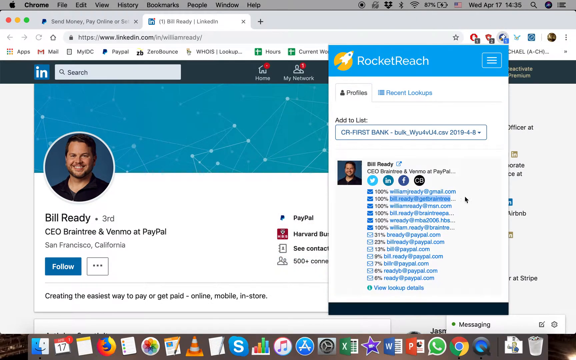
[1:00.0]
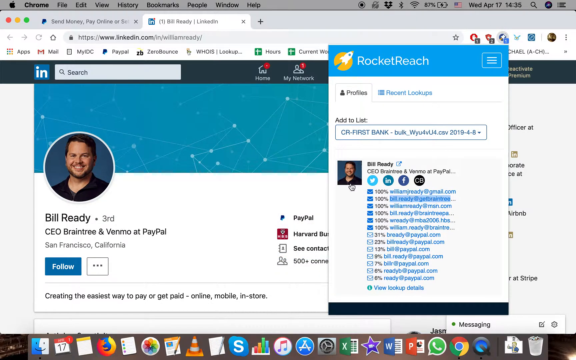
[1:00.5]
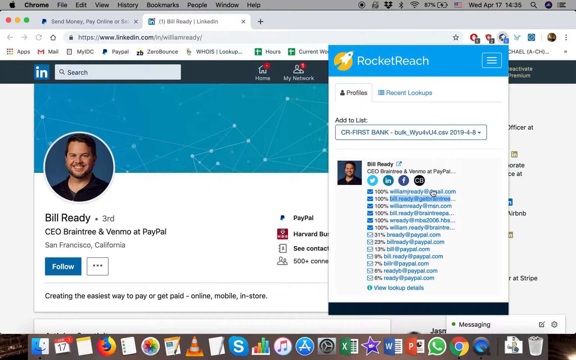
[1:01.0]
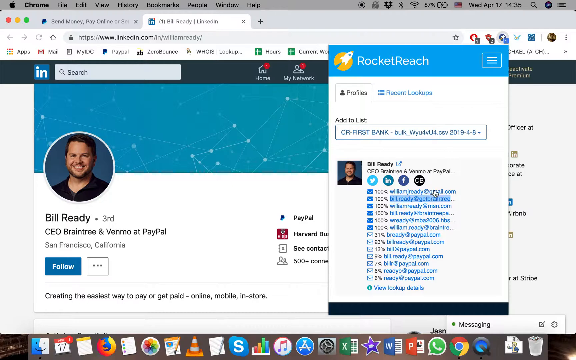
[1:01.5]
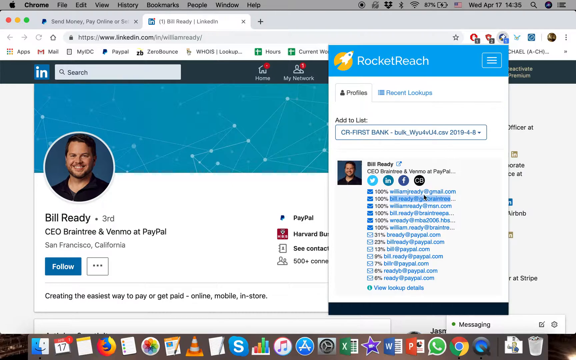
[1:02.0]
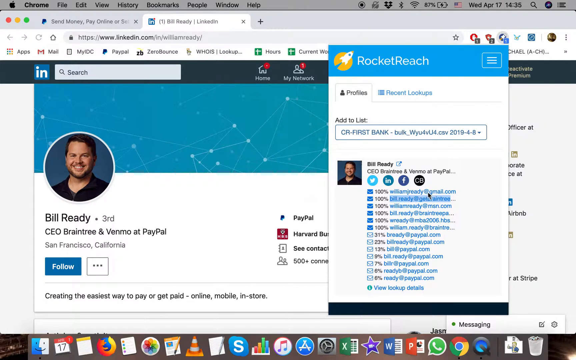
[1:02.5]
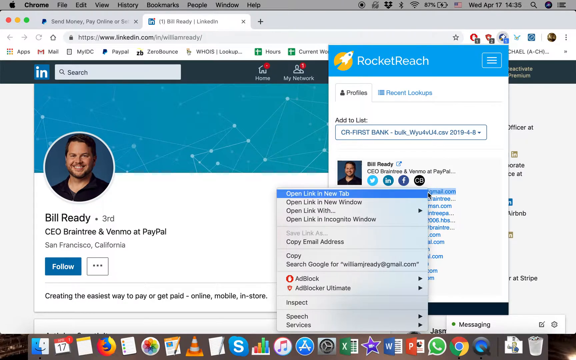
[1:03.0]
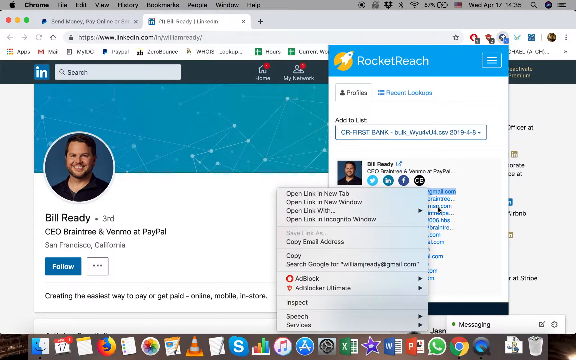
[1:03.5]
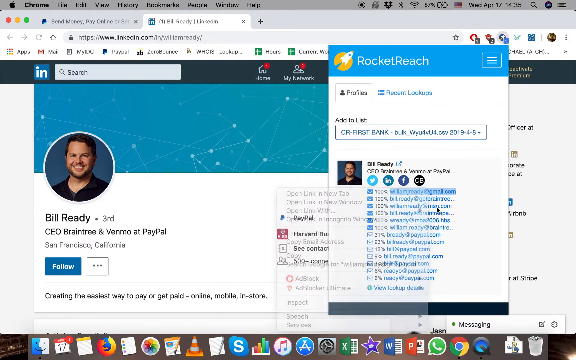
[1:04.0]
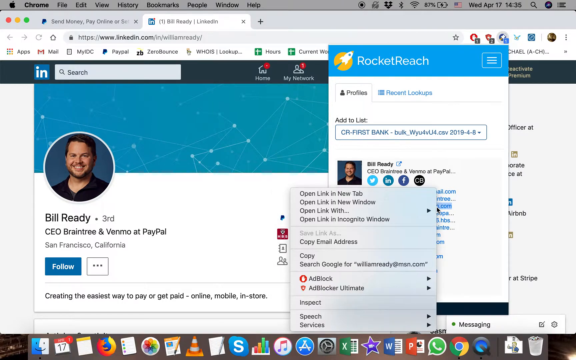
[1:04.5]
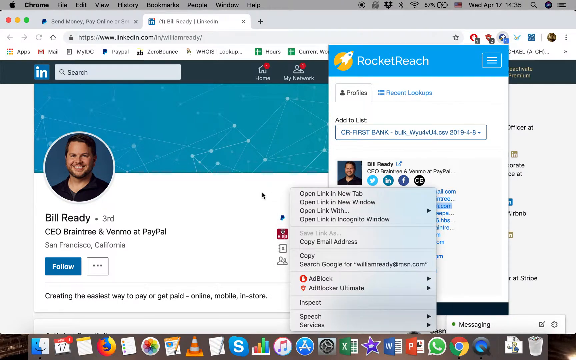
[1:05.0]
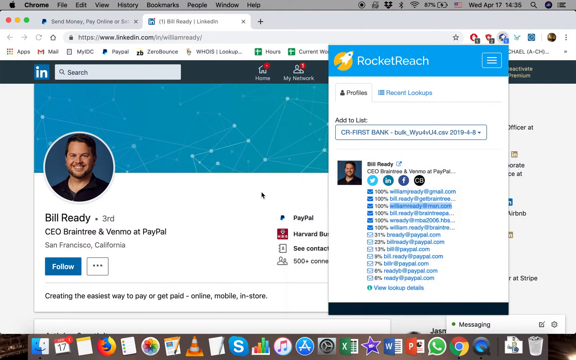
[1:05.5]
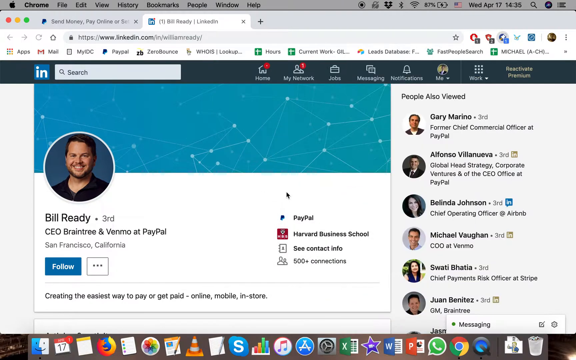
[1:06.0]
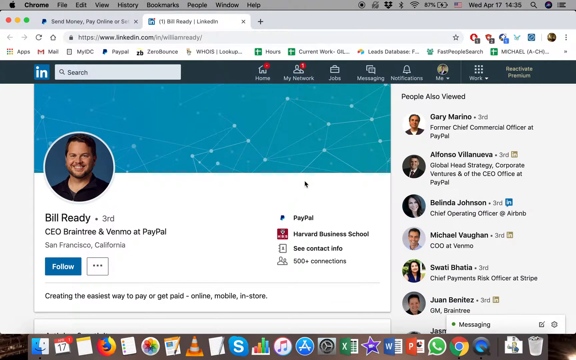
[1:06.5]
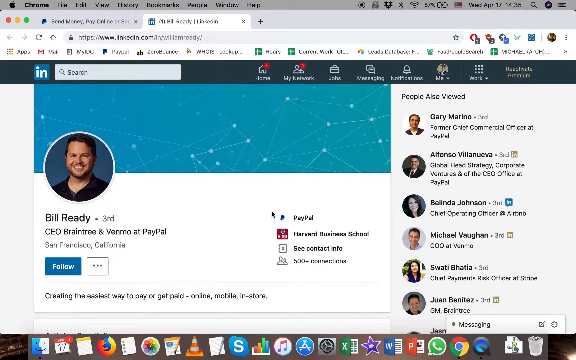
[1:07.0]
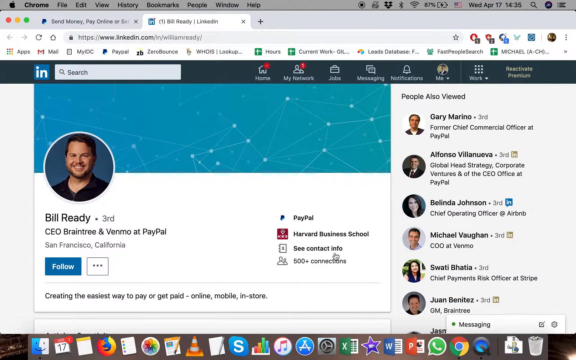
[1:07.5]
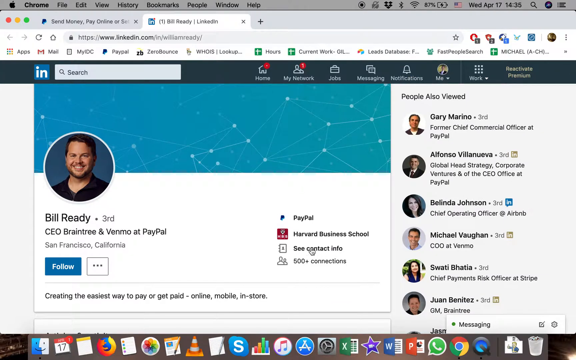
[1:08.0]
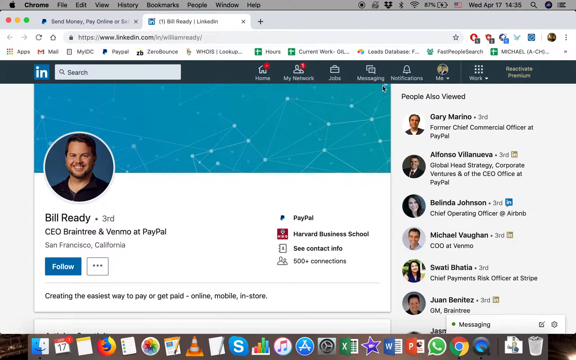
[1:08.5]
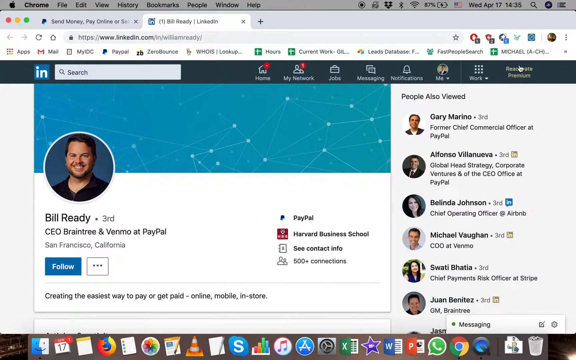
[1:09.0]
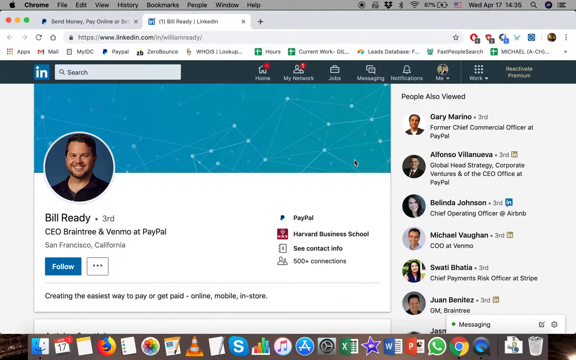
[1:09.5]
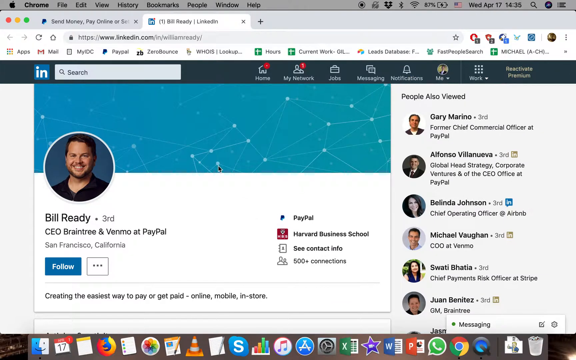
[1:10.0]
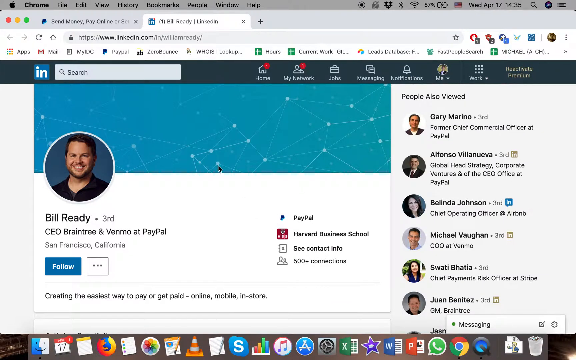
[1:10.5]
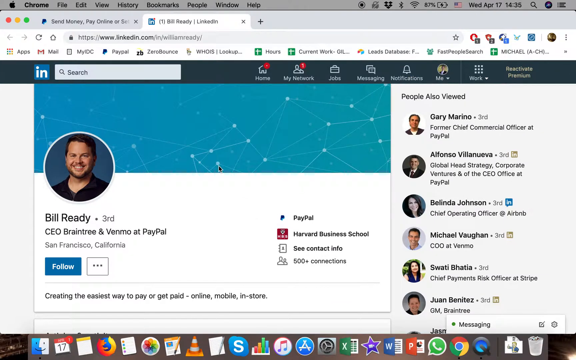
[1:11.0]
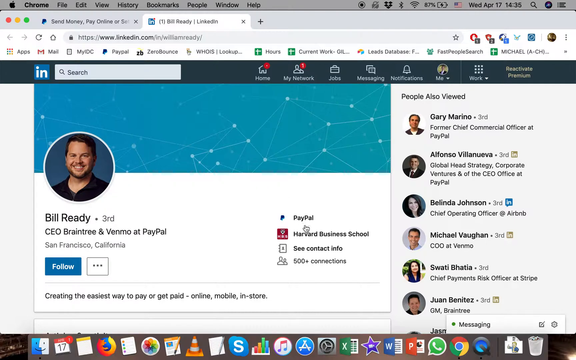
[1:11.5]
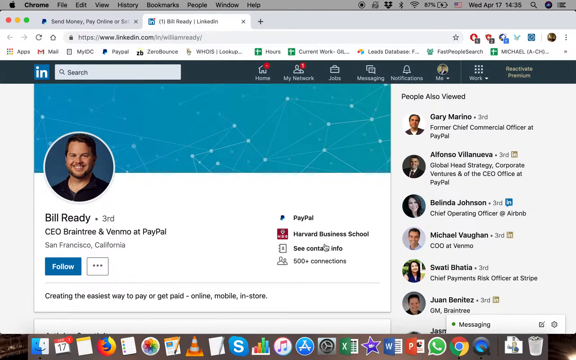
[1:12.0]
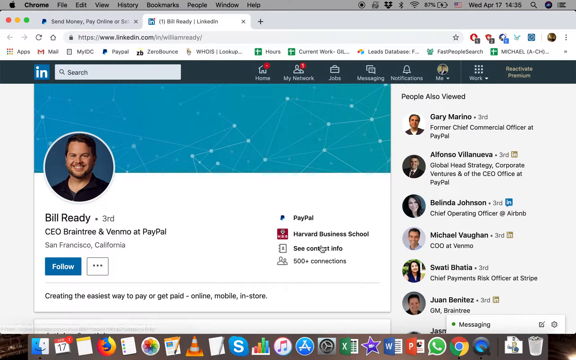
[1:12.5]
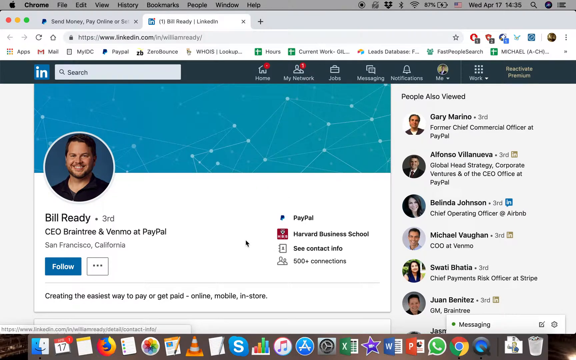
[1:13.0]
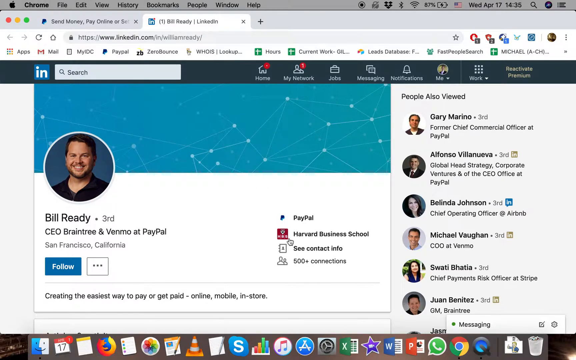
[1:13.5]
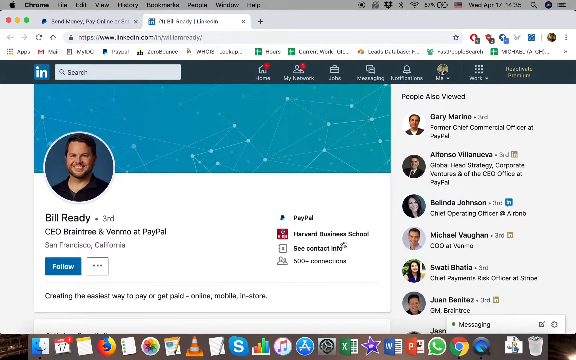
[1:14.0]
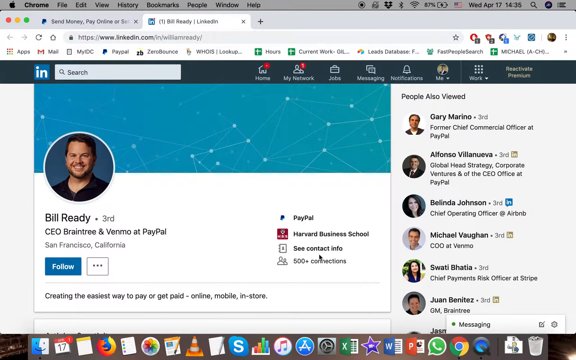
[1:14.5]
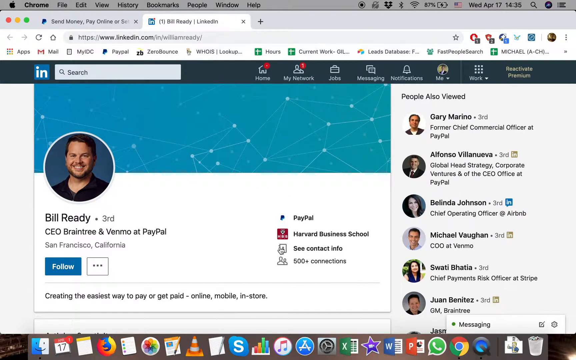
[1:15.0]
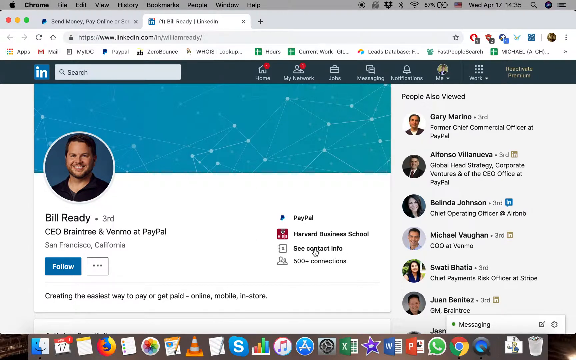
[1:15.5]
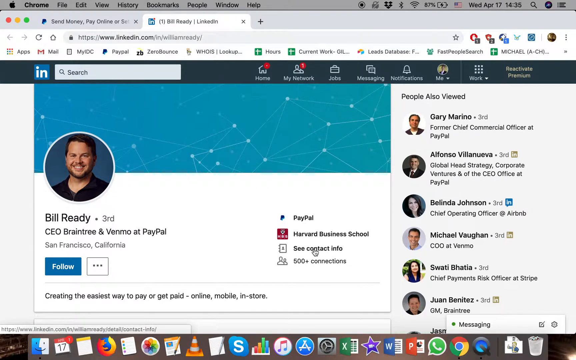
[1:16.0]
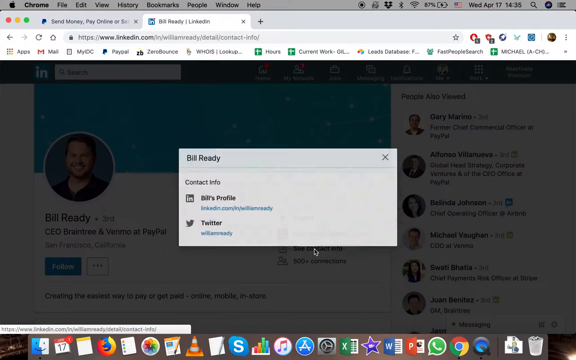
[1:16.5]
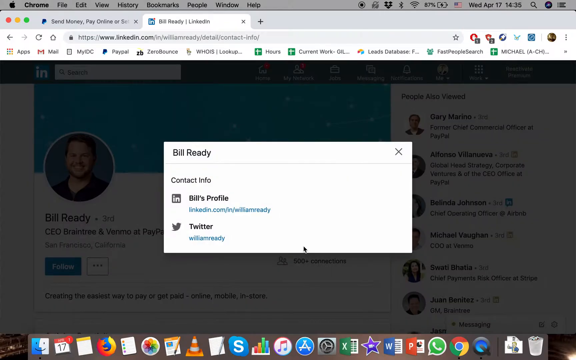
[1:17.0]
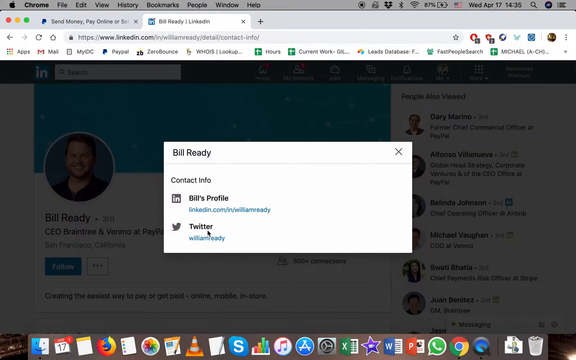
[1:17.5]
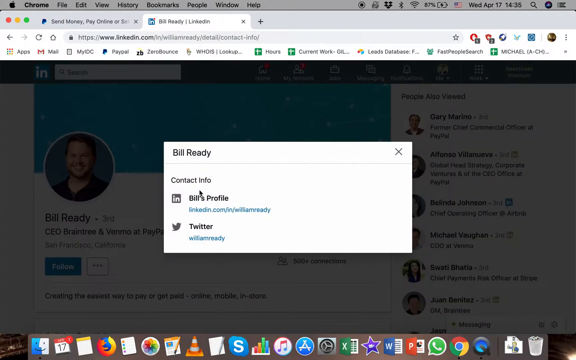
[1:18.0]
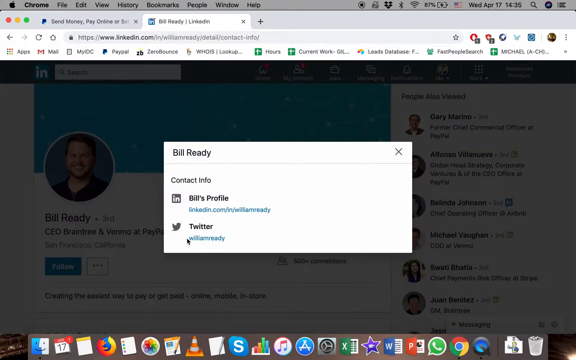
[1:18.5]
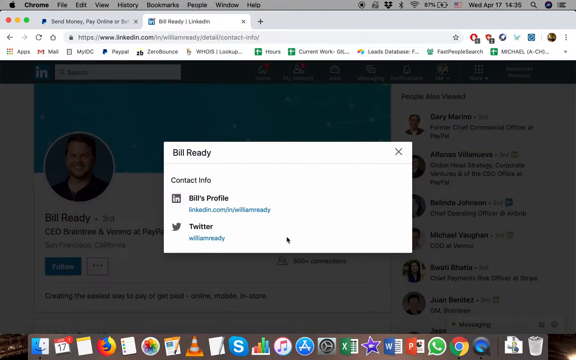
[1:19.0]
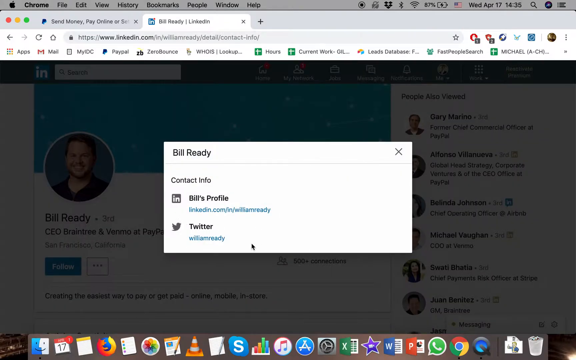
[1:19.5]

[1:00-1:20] The browser has two tabs: paypal.com and a LinkedIn profile for Bill Reddy, CEO of Braintree and Venmo at PayPal. The Rocket Reach browser extension is open, listing Bill Reddy's profile with links to his four social media accounts on Twitter, LinkedIn, Facebook, and a website with the initial CB. Listed underneath are potential email addresses associated with the profile, each with a percentage to its left showing the chance it is associated with the person. The user right-clicks the top email, opening a context menu, closes it, and left-clicks to close the extension. The user mouses over "See Contact Info" on the LinkedIn profile, moves the cursor away, returns to it multiple times, and clicks it. A pop-up opens within the page reading "Bill Ready Contact Info," listing Bill's profile, Bill Ready's LinkedIn profile, and Twitter with Bill Ready's Twitter handle.